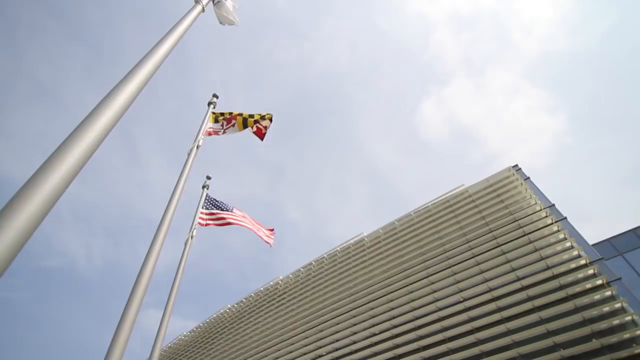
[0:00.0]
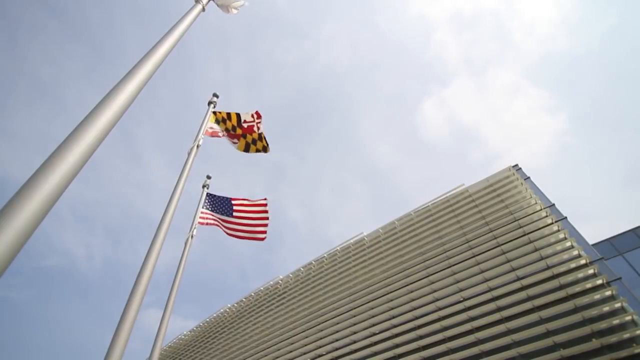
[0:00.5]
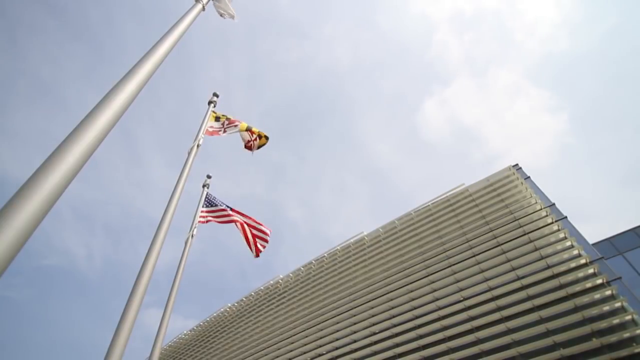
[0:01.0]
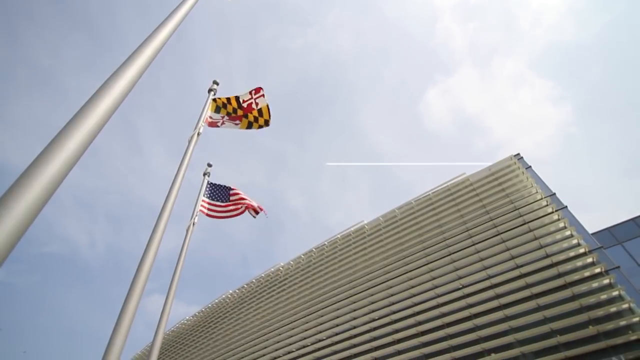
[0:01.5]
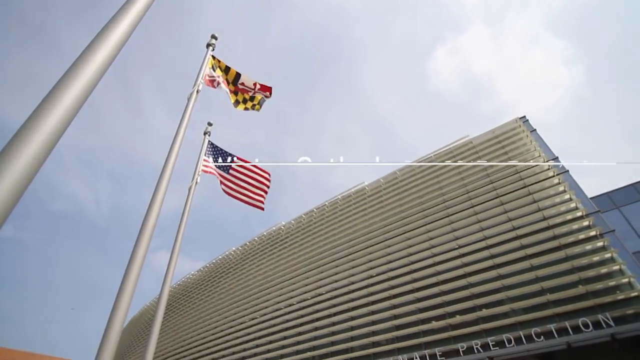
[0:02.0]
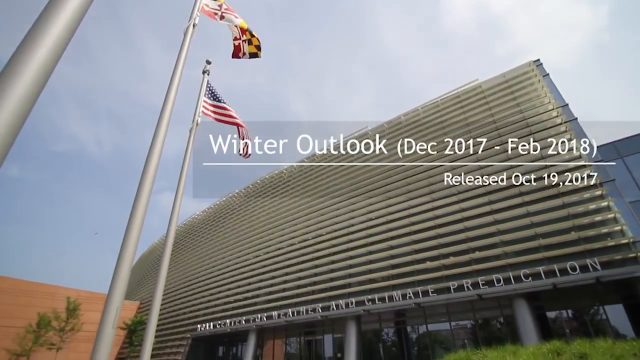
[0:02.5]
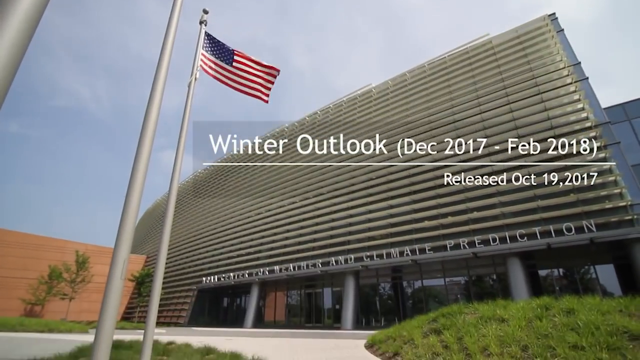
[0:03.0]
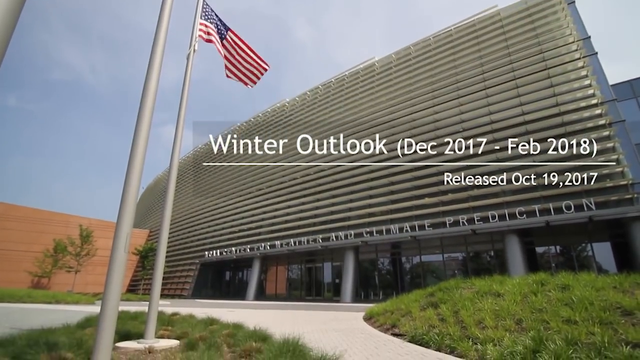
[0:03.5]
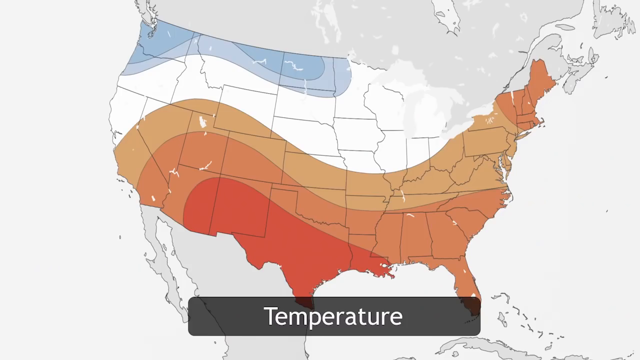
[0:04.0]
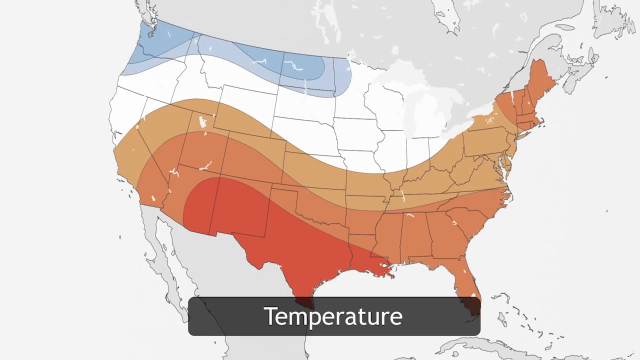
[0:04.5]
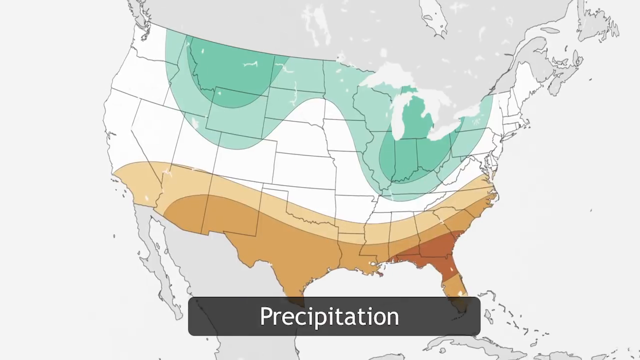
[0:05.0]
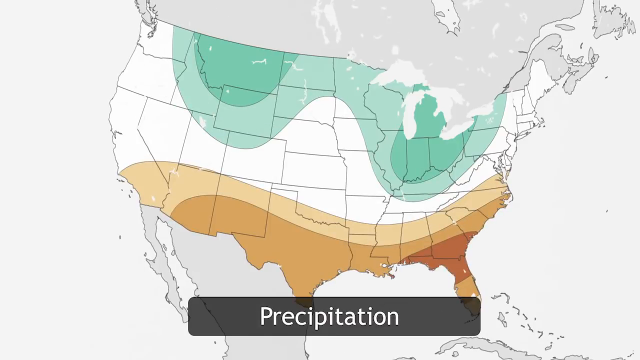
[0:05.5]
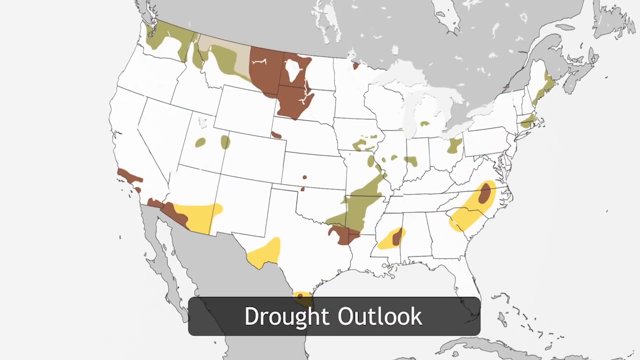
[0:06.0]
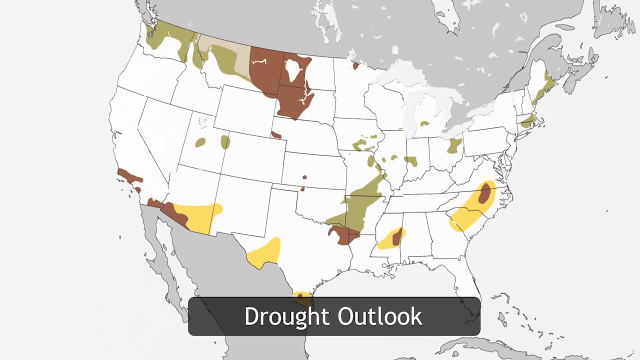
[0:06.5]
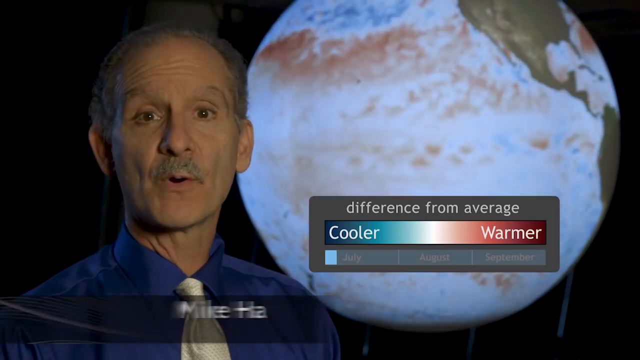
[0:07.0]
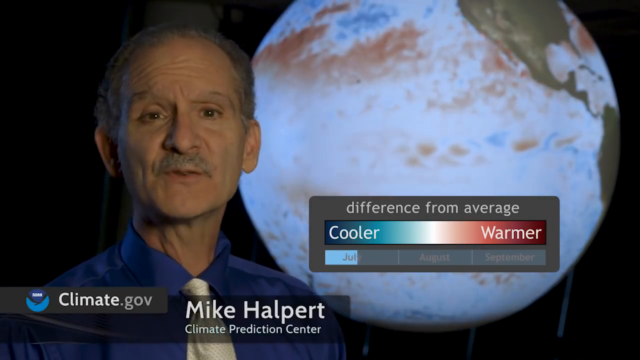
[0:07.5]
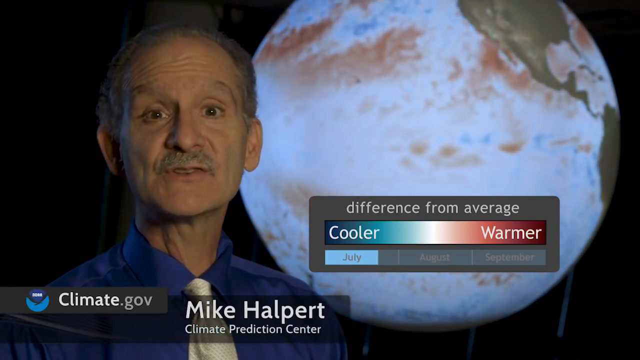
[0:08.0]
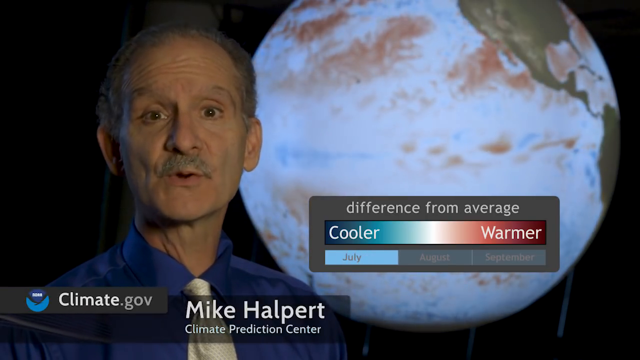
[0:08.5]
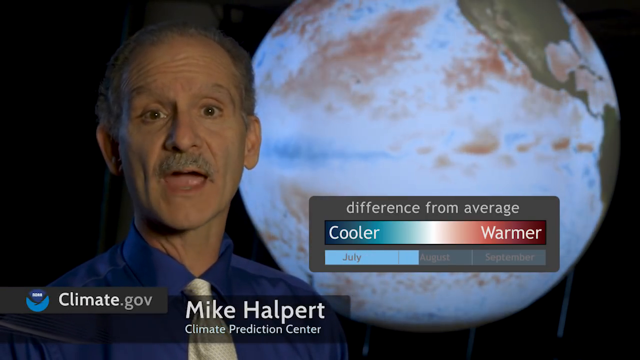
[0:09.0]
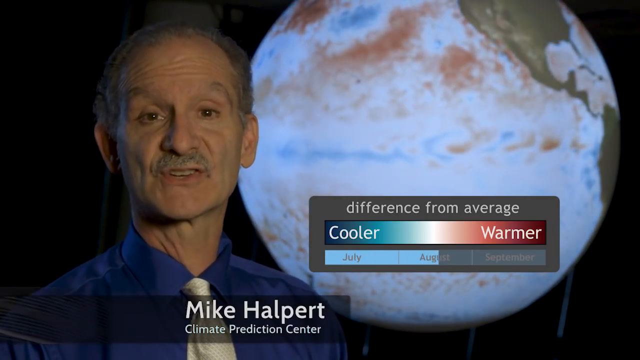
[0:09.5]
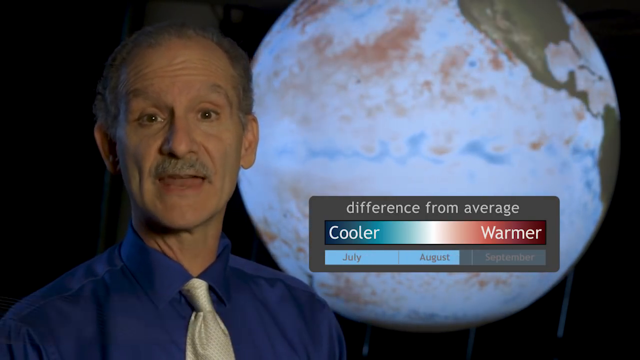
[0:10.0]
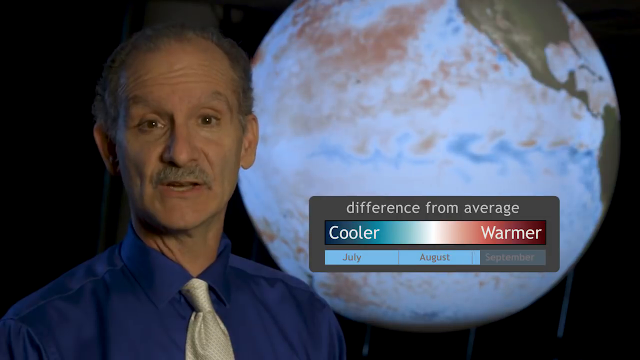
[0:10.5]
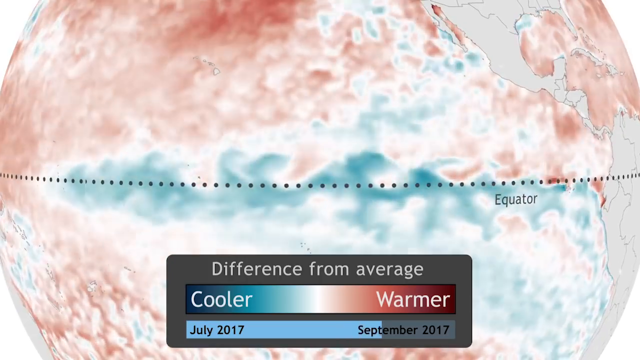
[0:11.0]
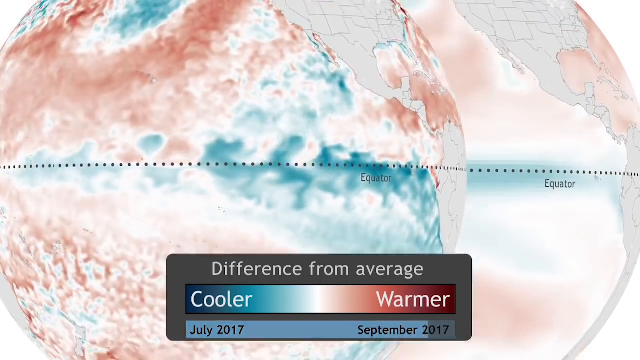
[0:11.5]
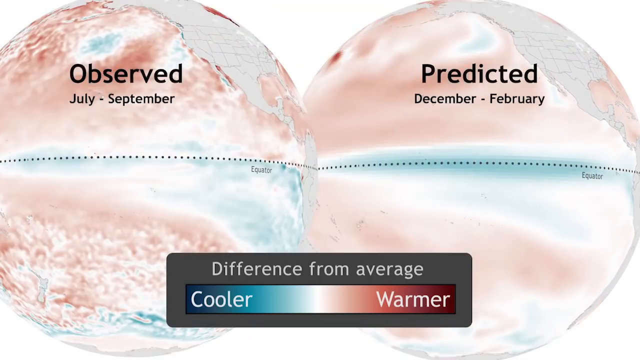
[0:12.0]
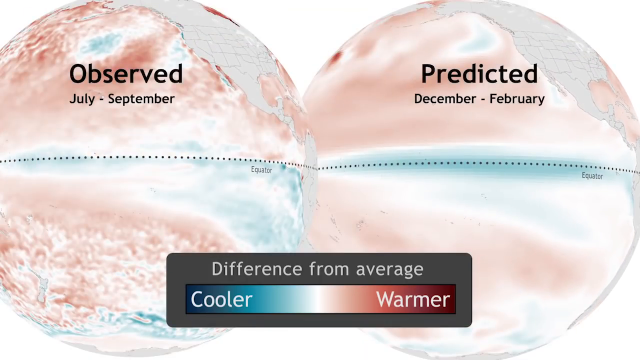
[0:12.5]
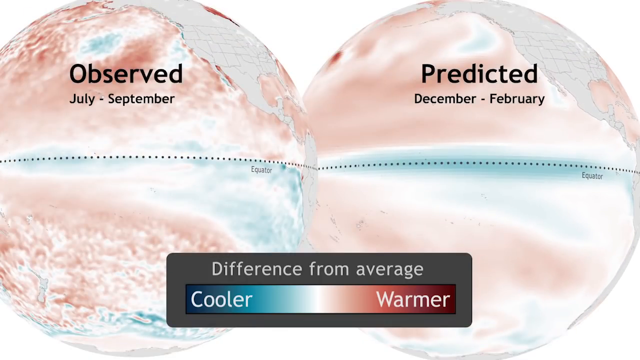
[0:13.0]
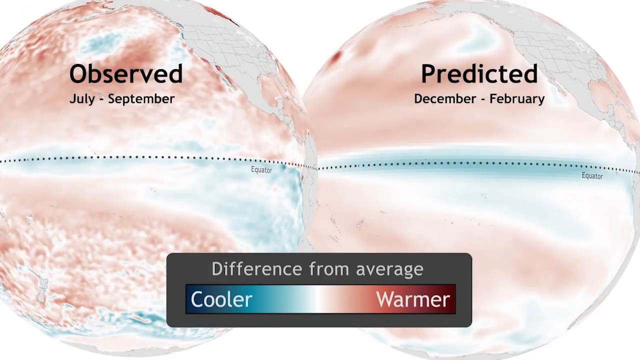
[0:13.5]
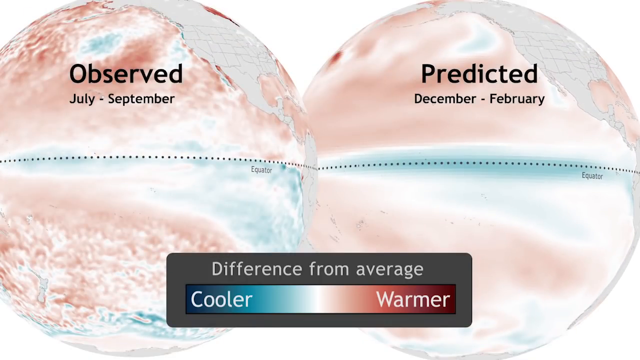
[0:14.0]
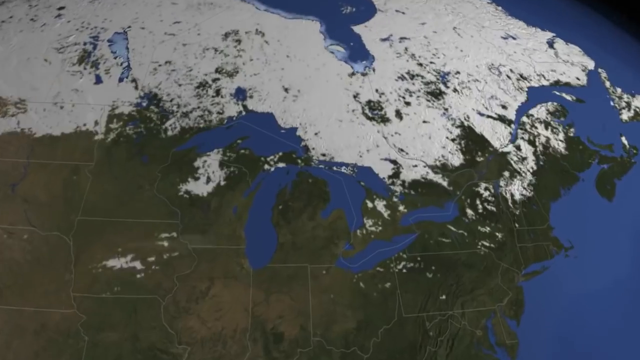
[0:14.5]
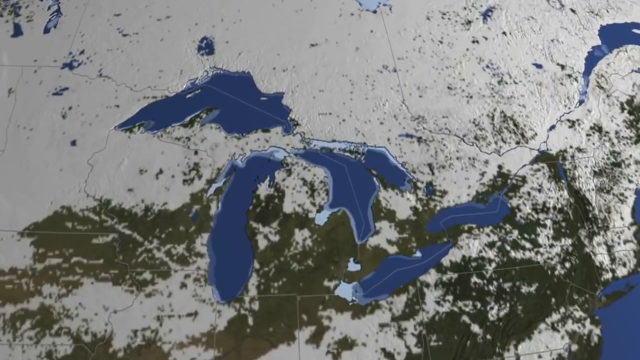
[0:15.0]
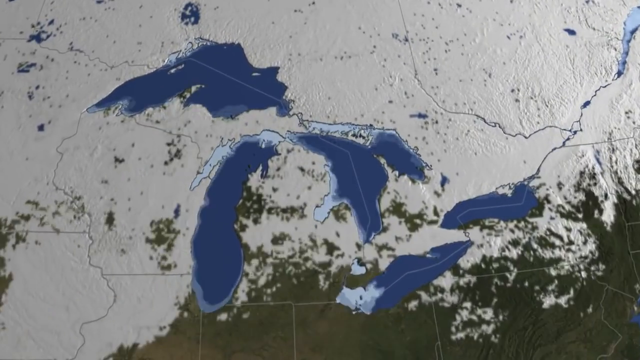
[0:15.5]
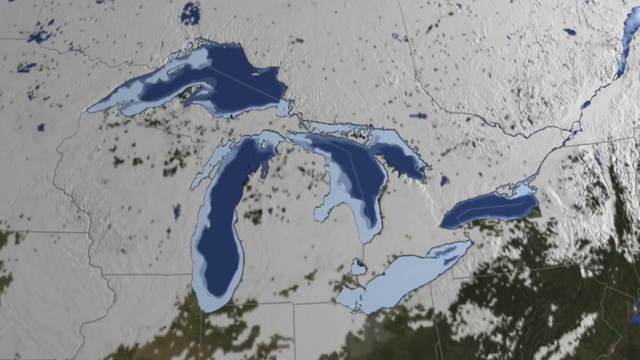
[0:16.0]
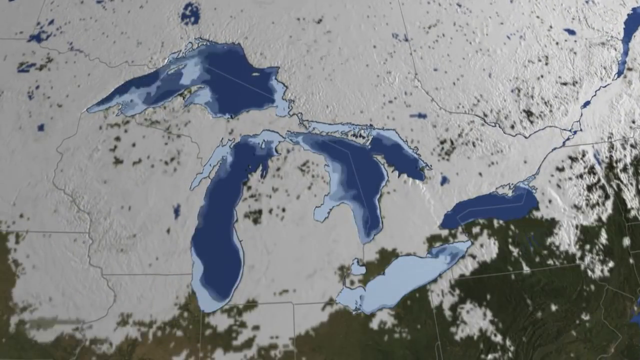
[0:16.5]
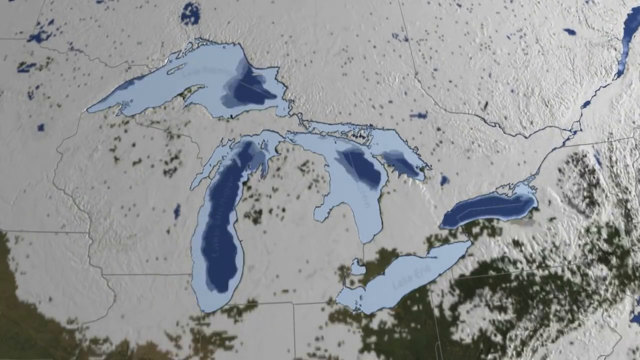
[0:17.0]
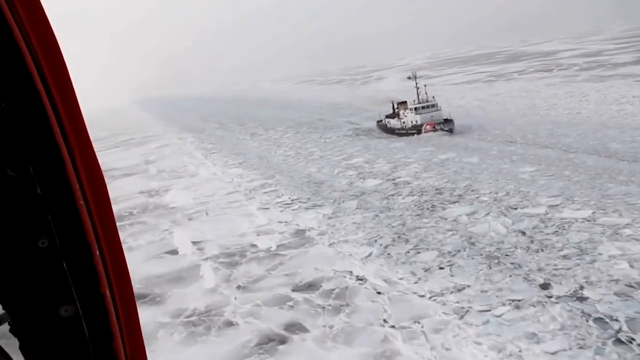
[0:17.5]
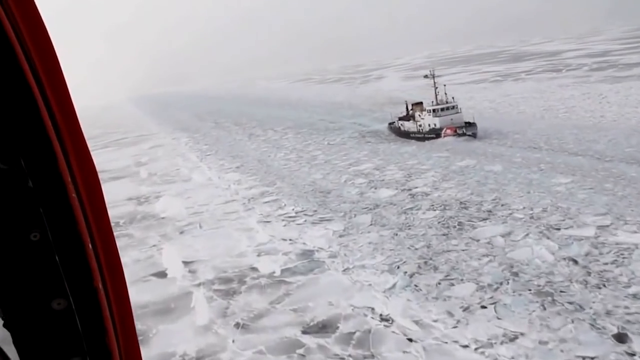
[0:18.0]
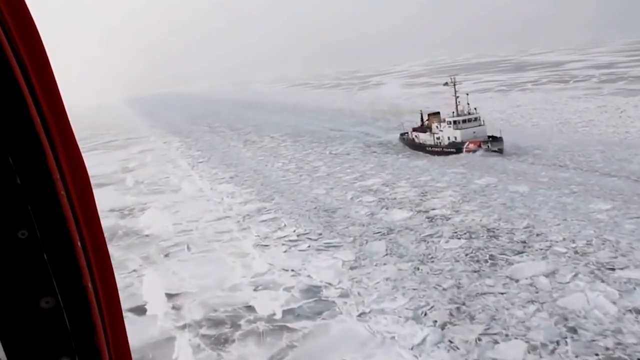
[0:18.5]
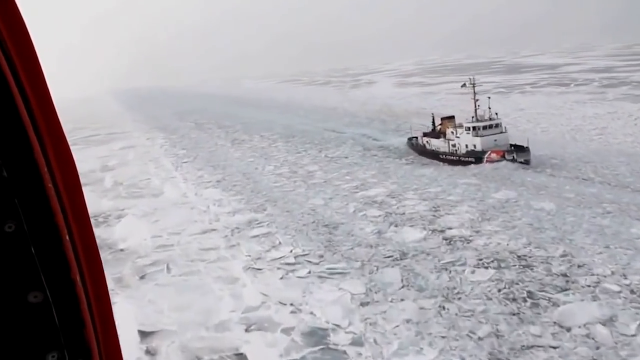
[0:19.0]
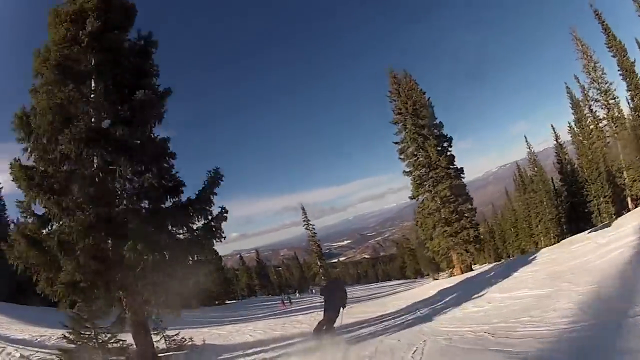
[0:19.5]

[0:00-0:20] A building with a bunch of flags waving appears; it looks like some sort of climate change prediction building, apparently for scientific research. The video is titled Winter Outlook, December 2007 to February 2018, and was released October 19th. A temperature outlook showing a rise in temperature is shown. An older man is speaking; he is a spokesman for climate.gov named Mike Halpert, who works at the Climate Prediction Center. A scale model of the Earth is shown, heating up and cooling down simultaneously. The Great Lakes appear covered in snow and ice, and the next shot shows ice-breaking ships. A man skis down a mountainous slope while the camera sort of follows him from behind.